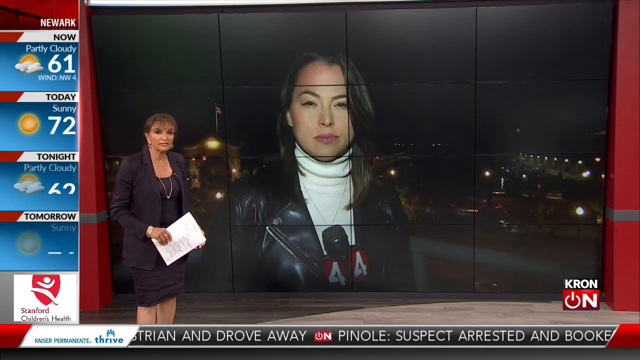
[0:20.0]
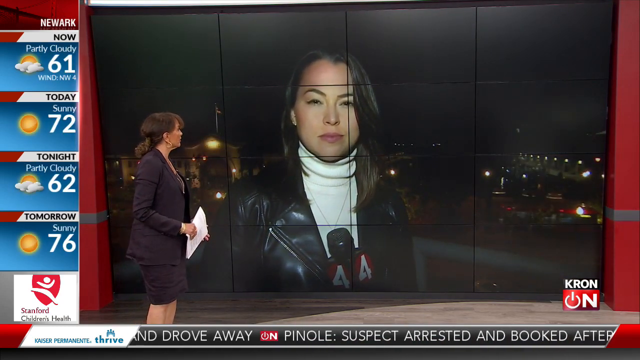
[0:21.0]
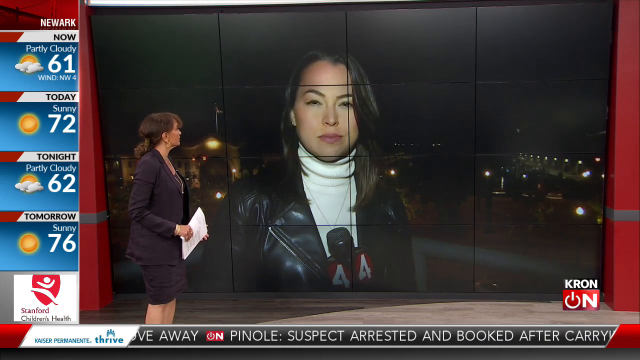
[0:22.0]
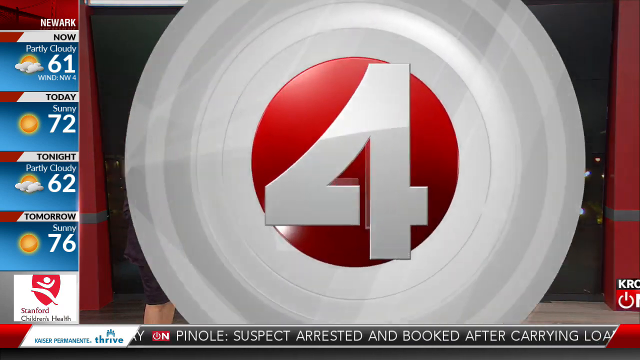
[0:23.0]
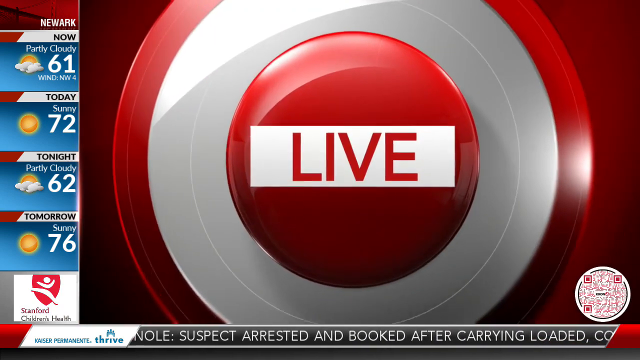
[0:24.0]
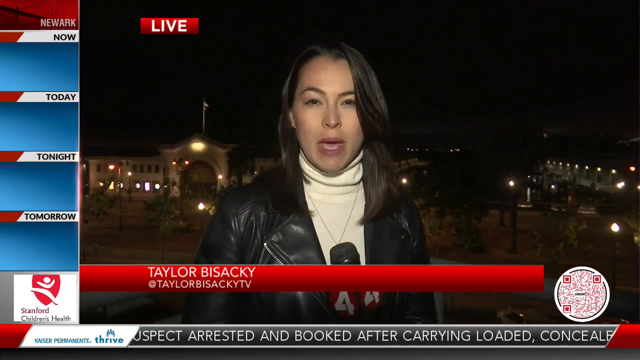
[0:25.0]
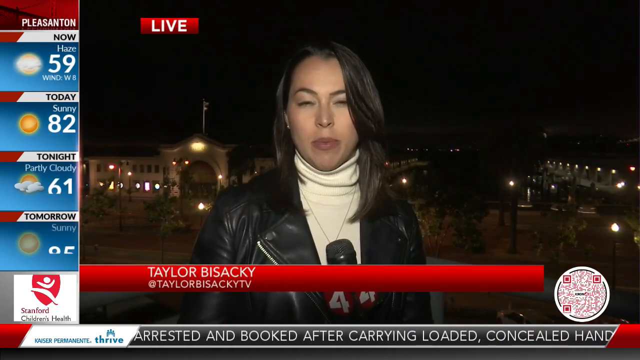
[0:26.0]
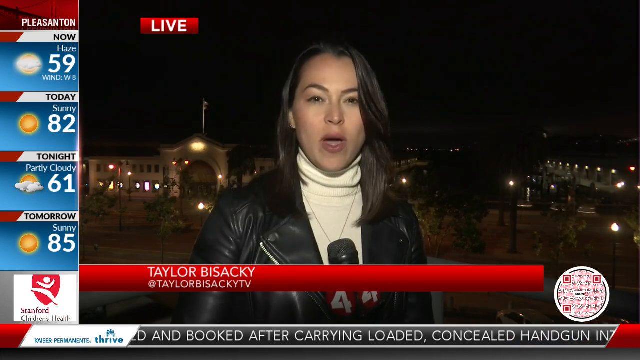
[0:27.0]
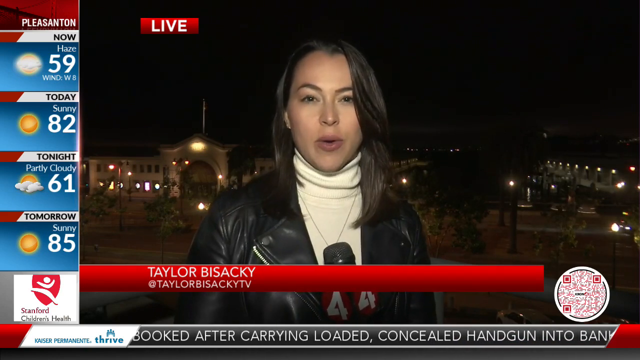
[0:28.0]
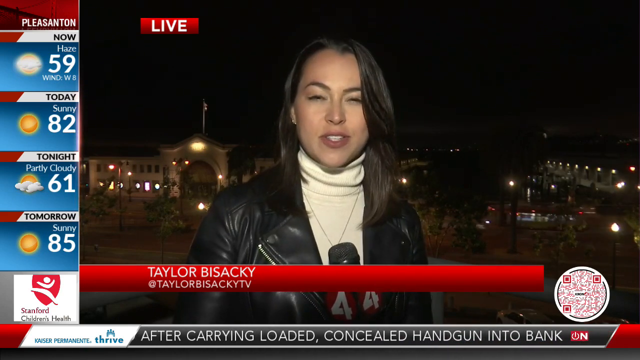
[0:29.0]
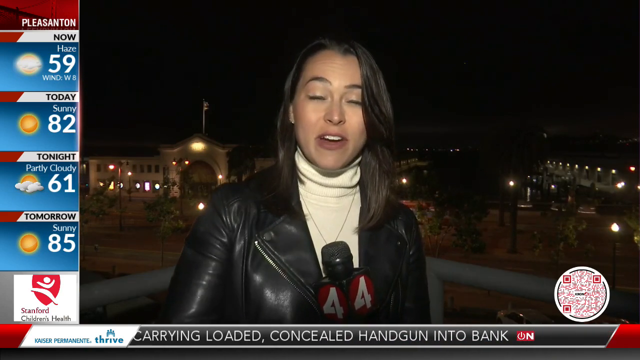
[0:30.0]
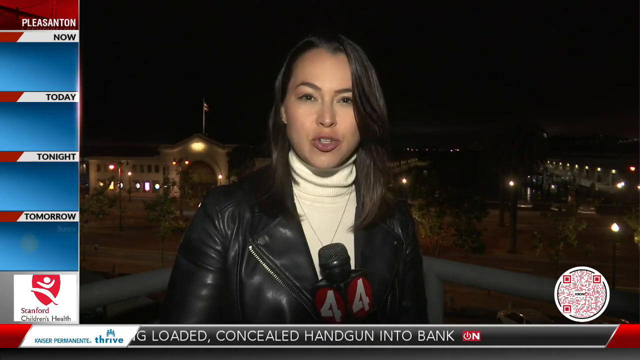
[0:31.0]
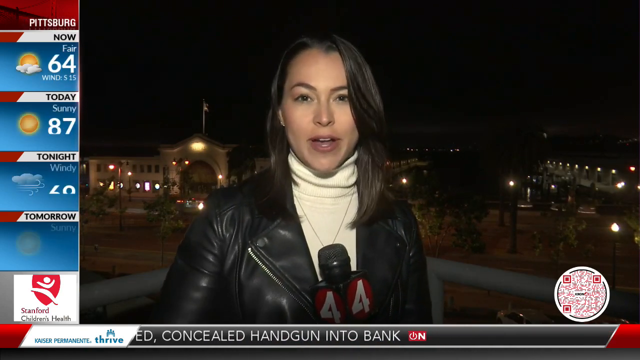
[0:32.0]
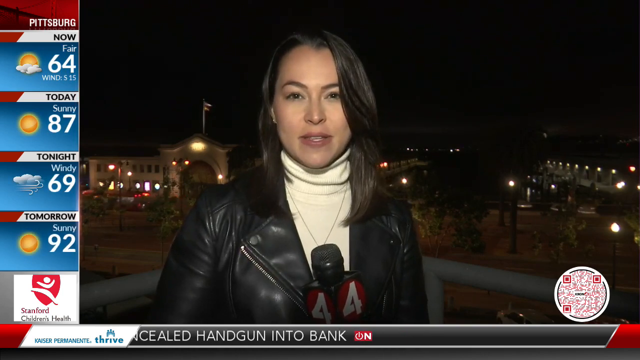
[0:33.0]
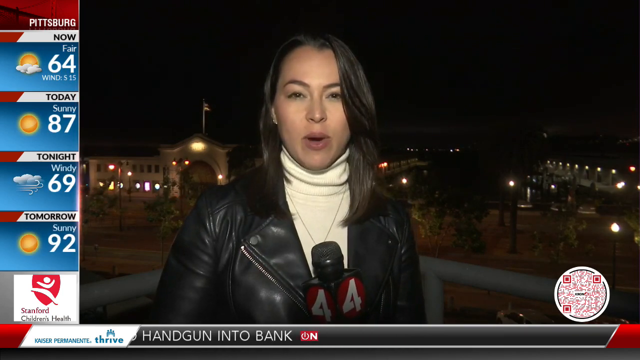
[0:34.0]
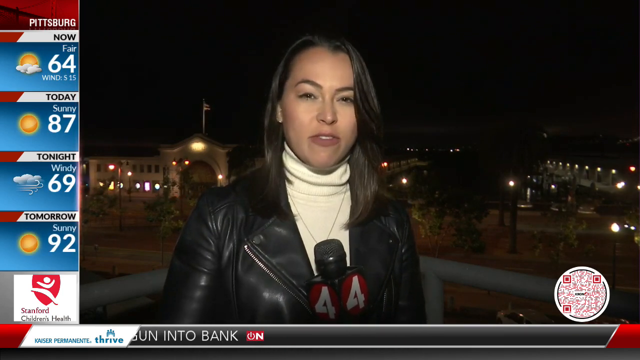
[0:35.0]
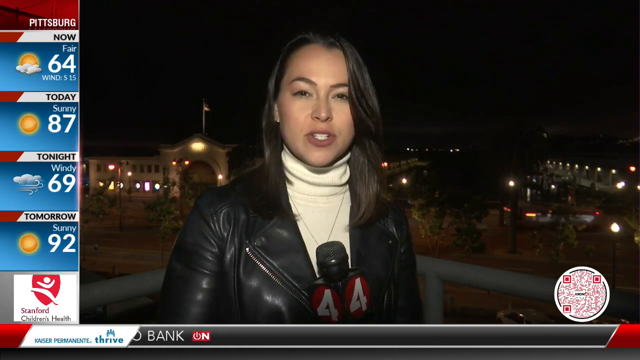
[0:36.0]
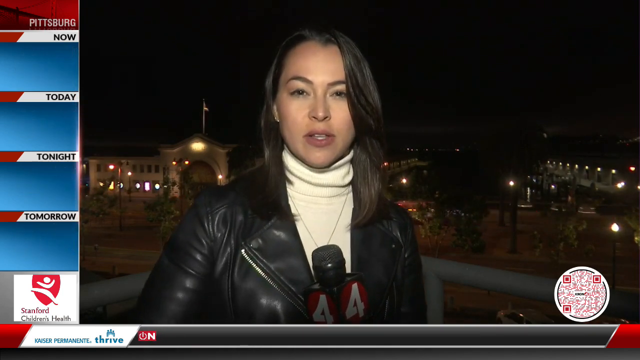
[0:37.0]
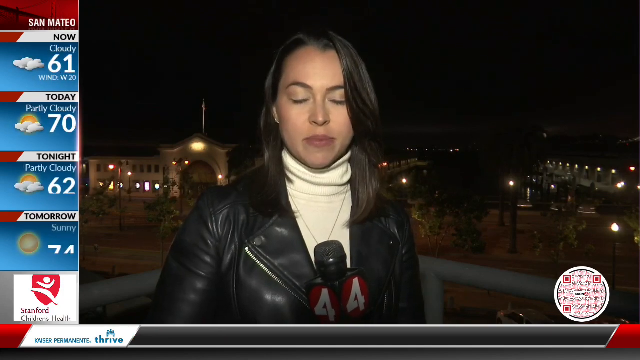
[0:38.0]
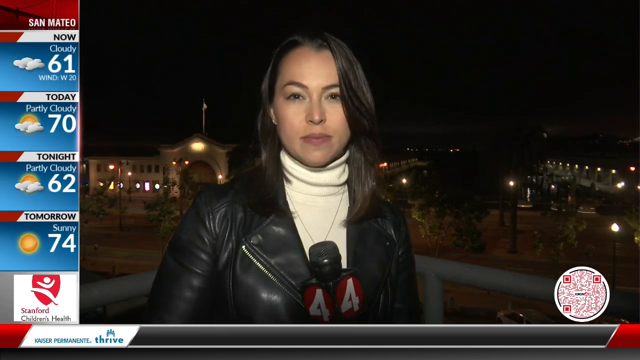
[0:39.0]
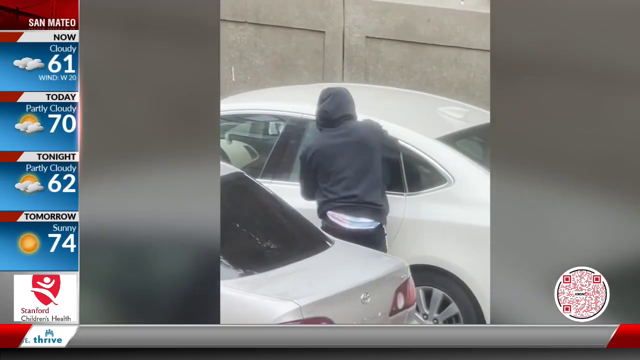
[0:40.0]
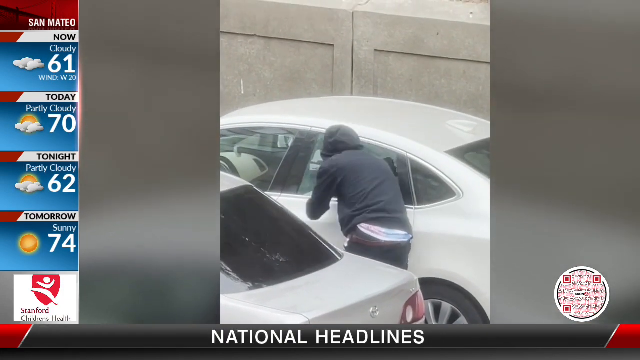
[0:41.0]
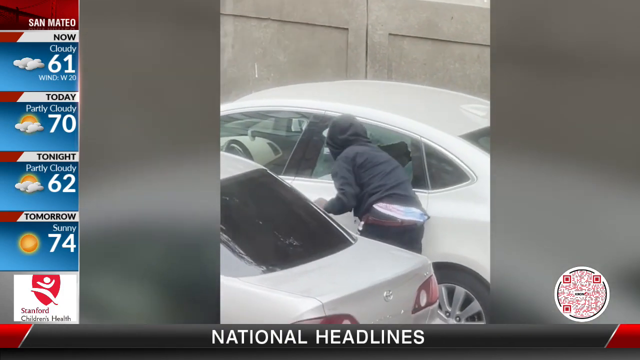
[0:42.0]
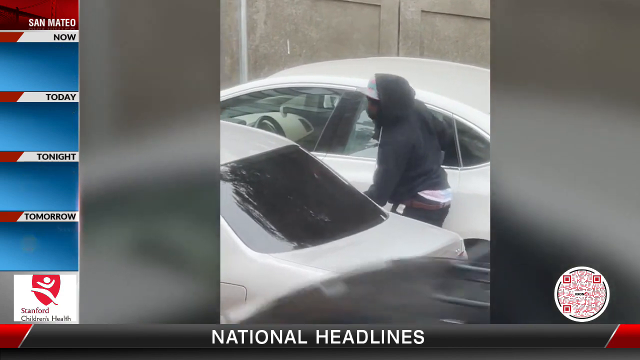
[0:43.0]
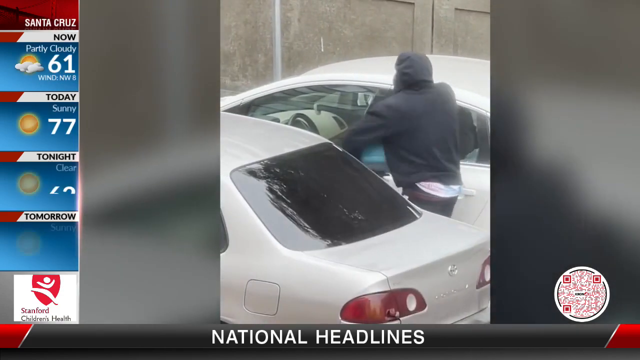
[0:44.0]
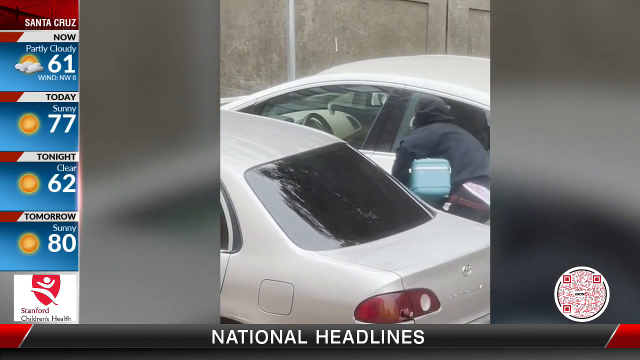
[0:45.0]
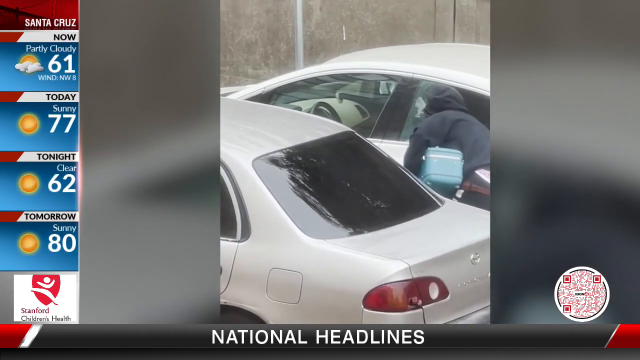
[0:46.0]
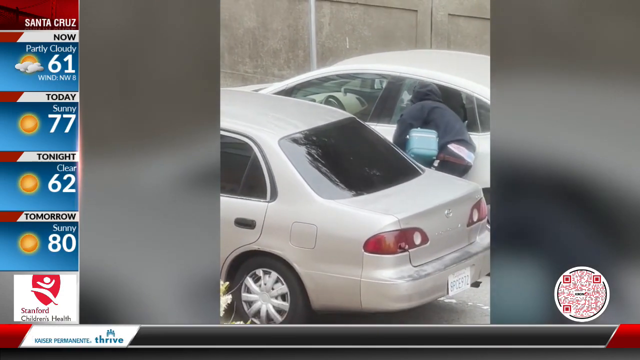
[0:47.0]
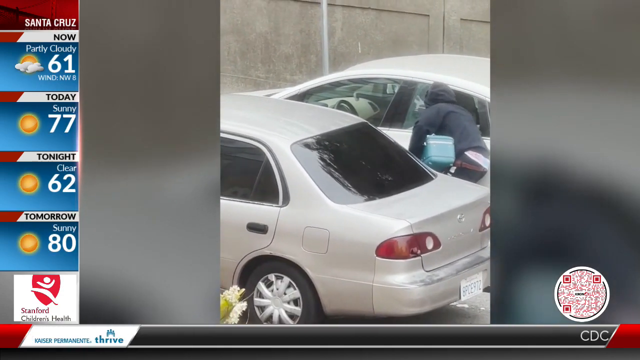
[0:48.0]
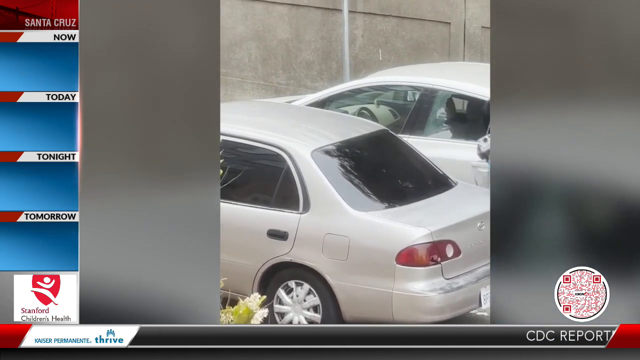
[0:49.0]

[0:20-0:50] The reporter stands at the scene of the newscast, wearing a white turtleneck with a black leather jacket over it, a necklace and earrings. She holds a microphone marked "44" and talks to the camera. A symbol at the top indicates a live feed. She is outside, with buildings behind her; a flag is on one of the buildings to the left, and cars are driving around. The video then cuts to footage of the carjacking caught on camera, with "national headlines" written beneath it. A man is messing with two white cars outside. Next, two people talk to the camera: a woman in a gray tank top and a man in a blue shirt.